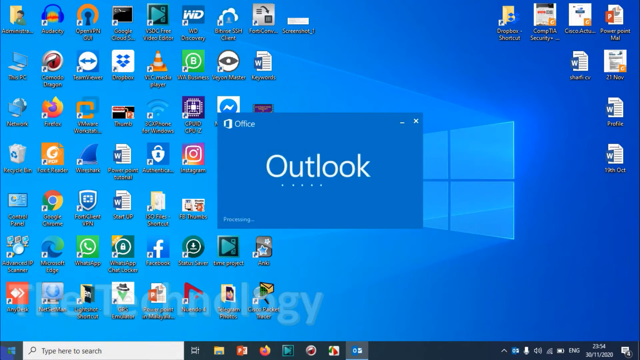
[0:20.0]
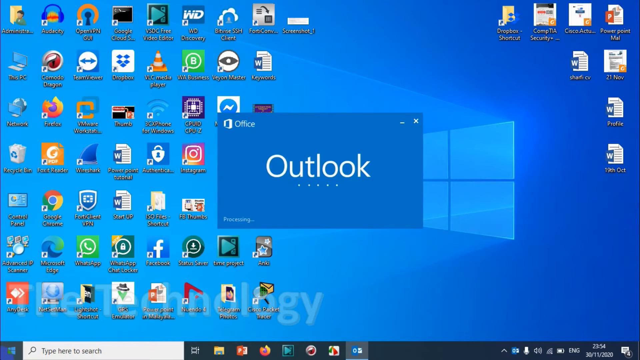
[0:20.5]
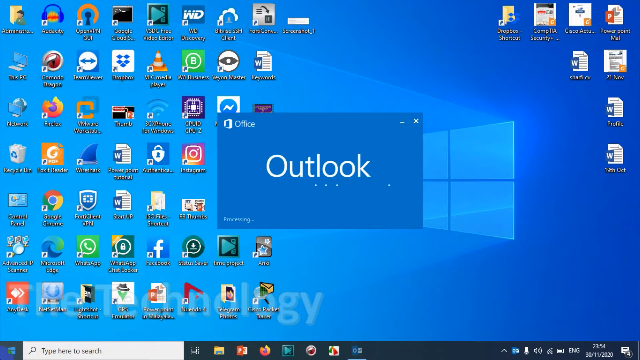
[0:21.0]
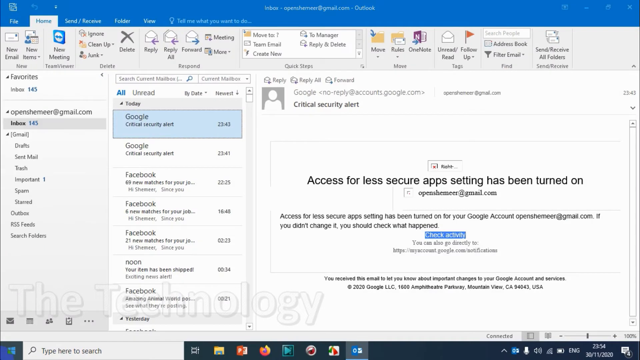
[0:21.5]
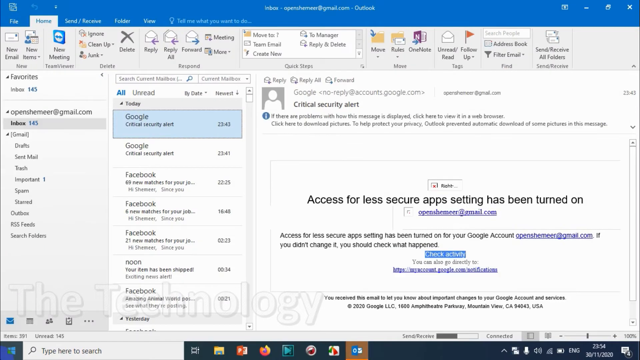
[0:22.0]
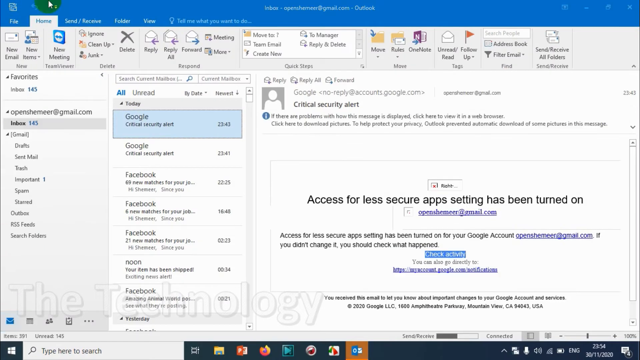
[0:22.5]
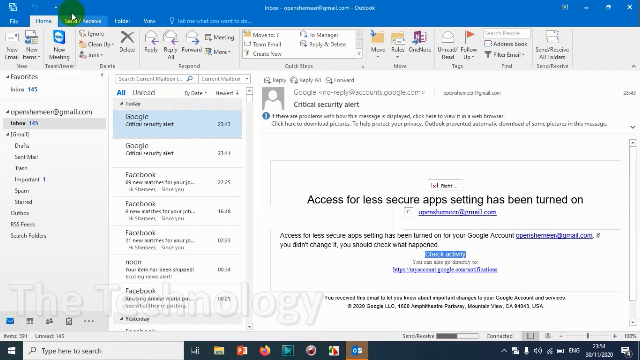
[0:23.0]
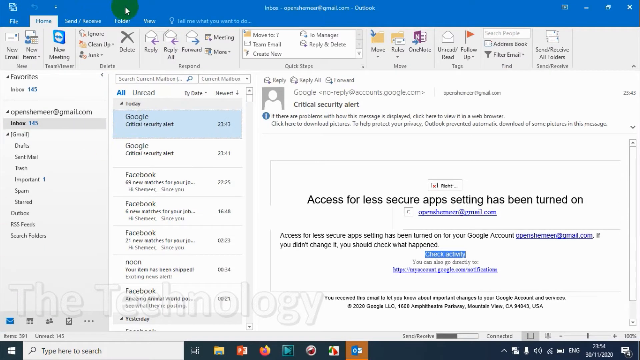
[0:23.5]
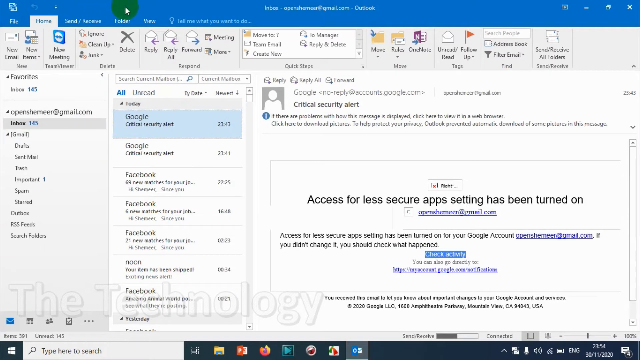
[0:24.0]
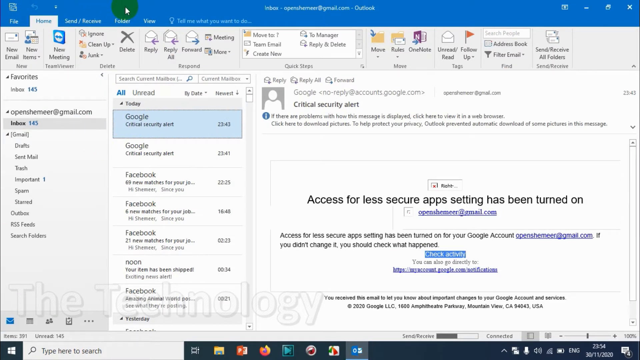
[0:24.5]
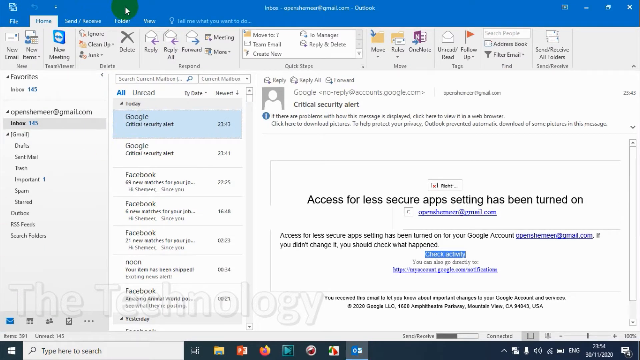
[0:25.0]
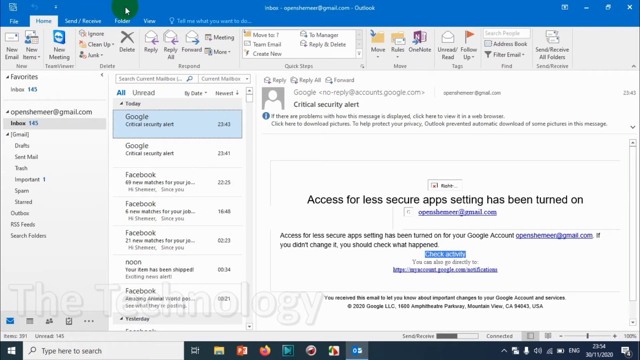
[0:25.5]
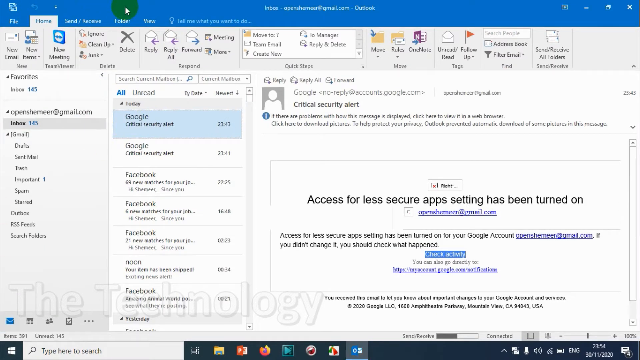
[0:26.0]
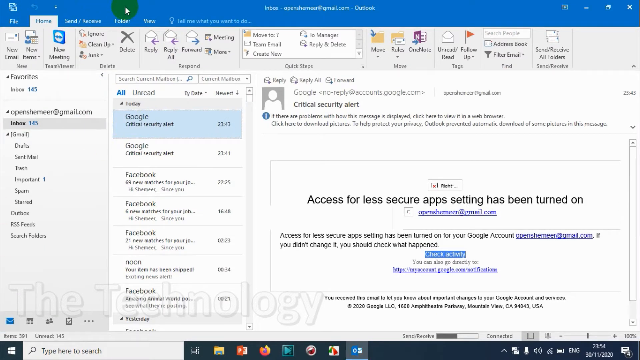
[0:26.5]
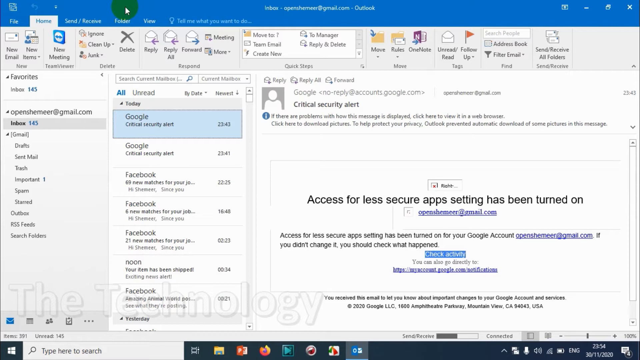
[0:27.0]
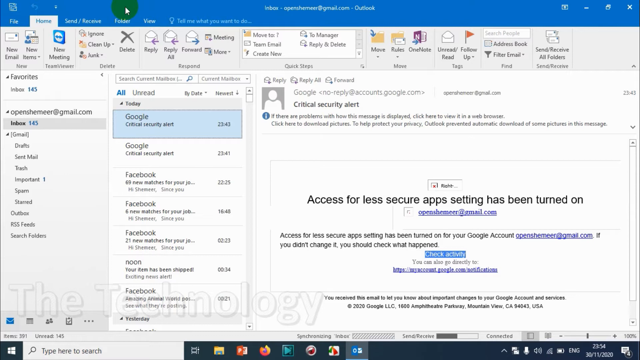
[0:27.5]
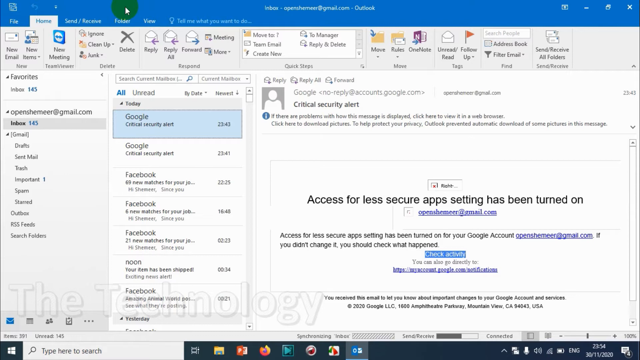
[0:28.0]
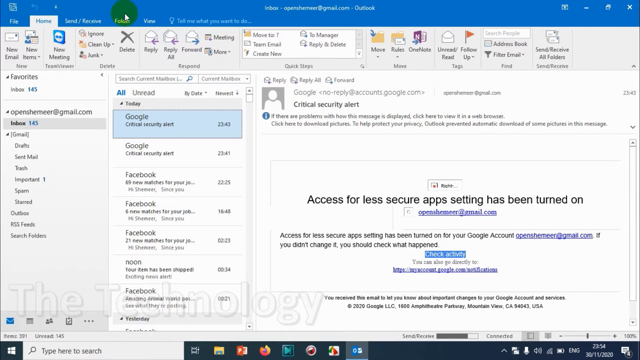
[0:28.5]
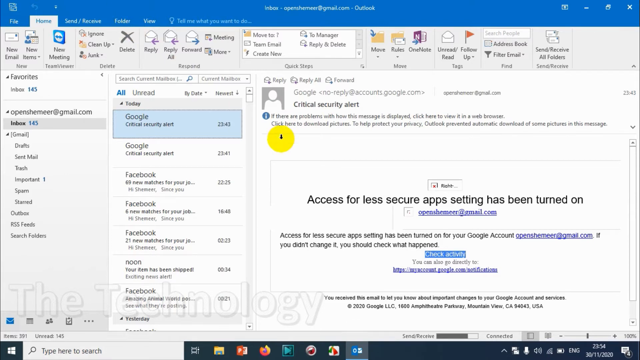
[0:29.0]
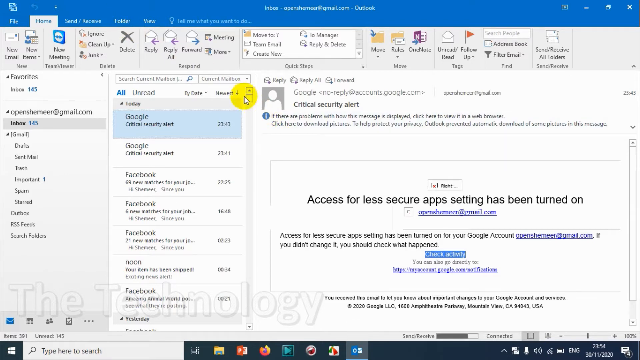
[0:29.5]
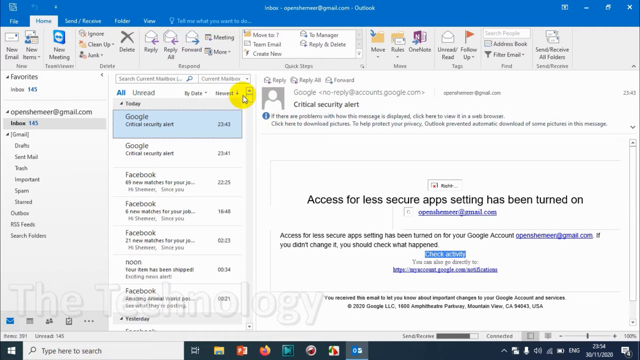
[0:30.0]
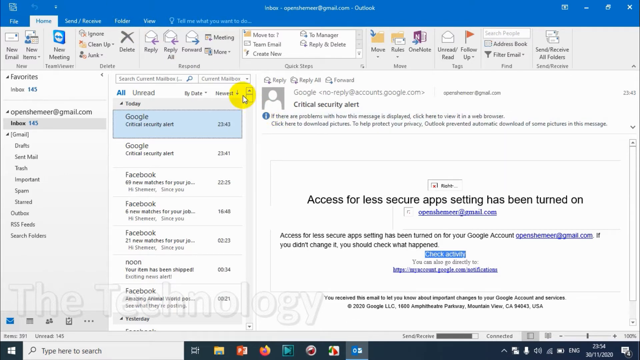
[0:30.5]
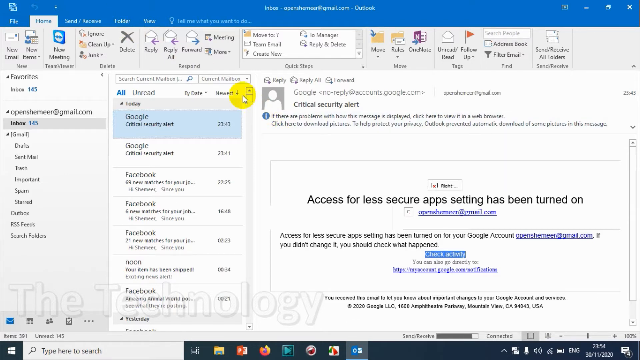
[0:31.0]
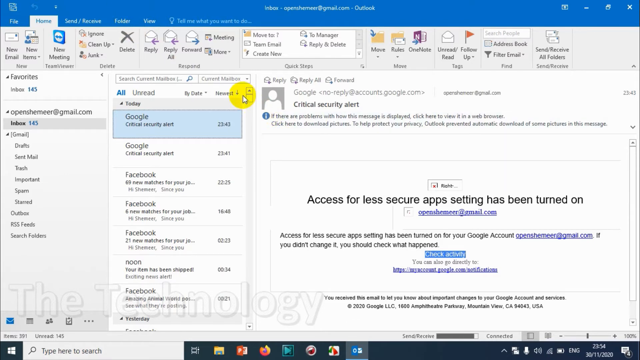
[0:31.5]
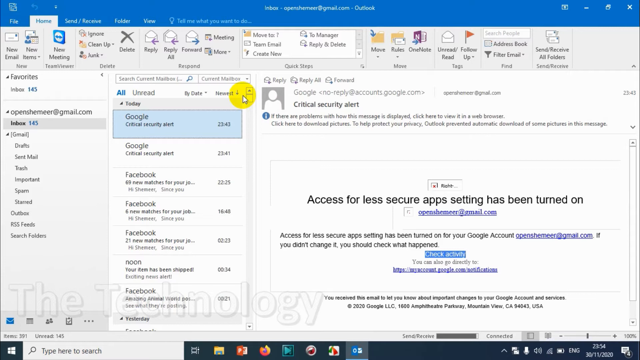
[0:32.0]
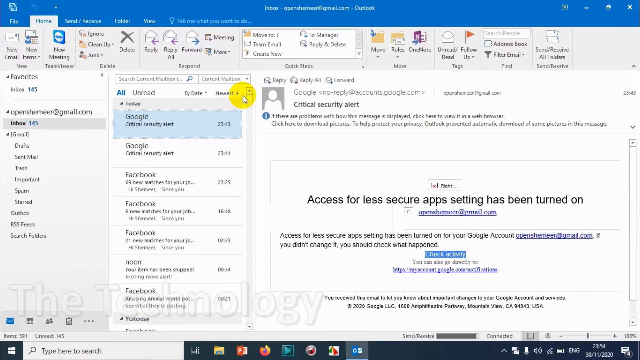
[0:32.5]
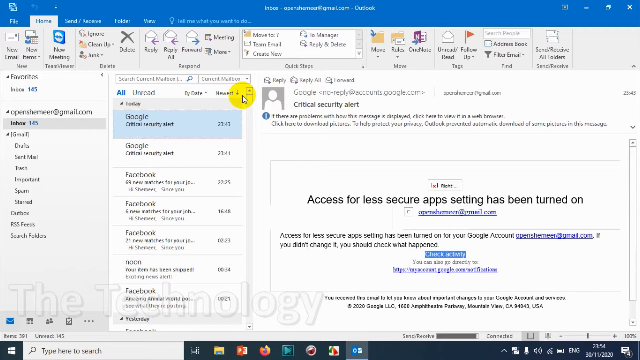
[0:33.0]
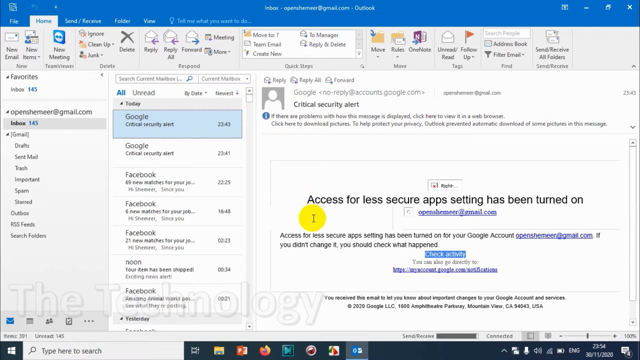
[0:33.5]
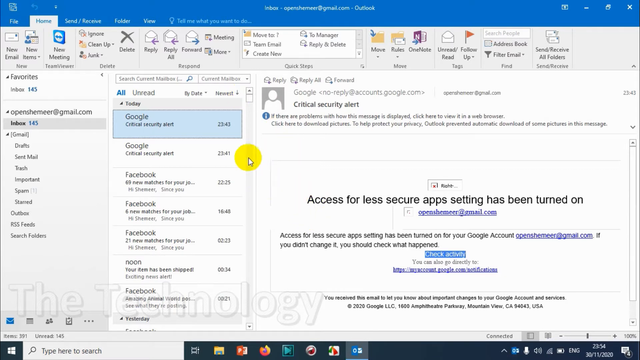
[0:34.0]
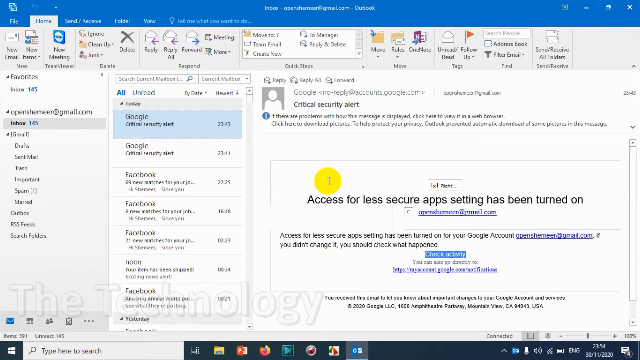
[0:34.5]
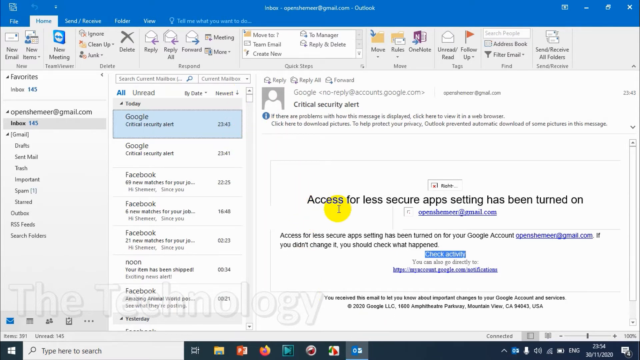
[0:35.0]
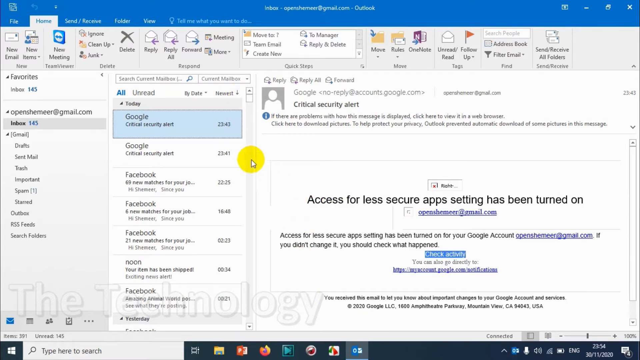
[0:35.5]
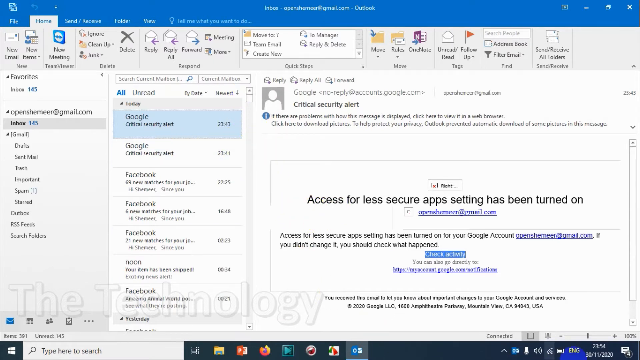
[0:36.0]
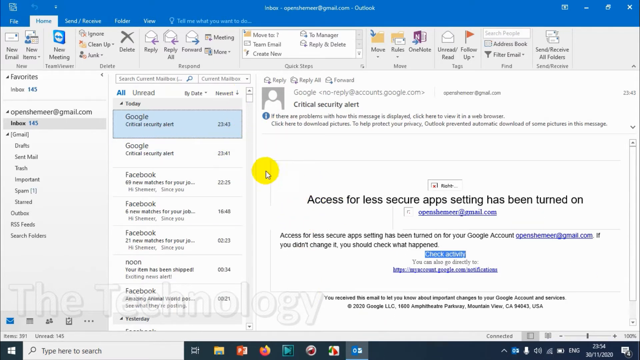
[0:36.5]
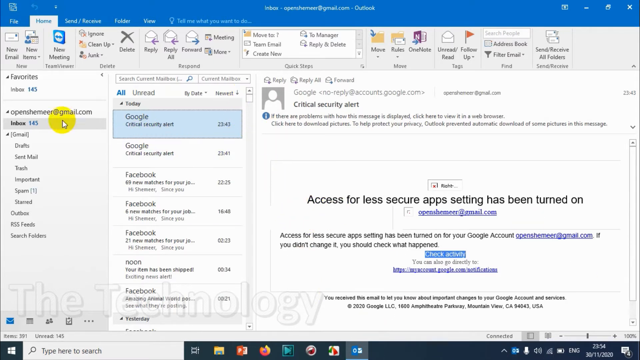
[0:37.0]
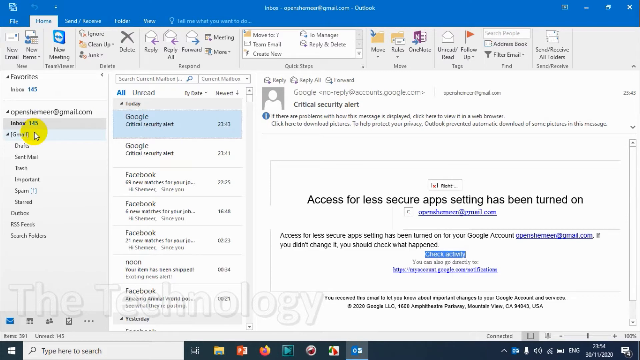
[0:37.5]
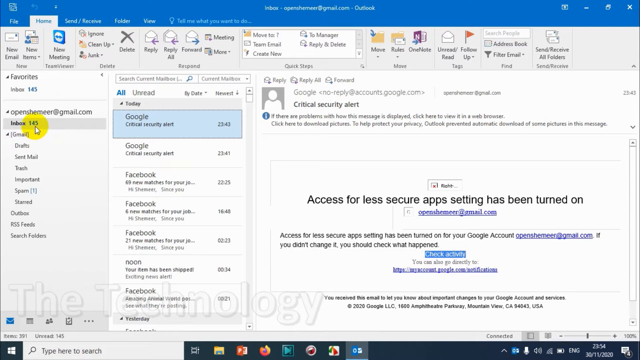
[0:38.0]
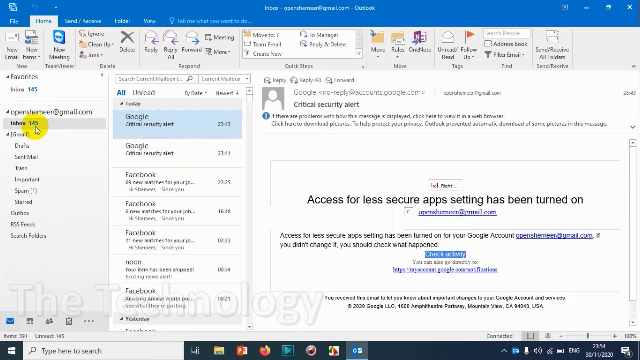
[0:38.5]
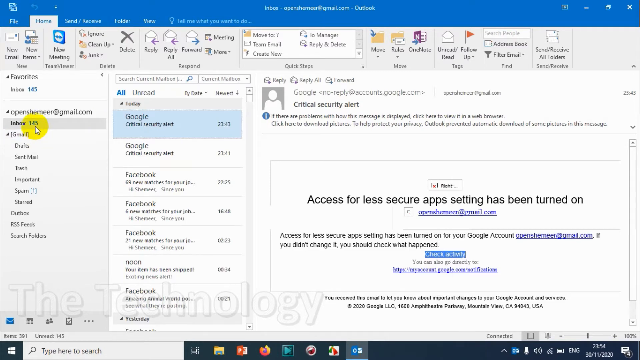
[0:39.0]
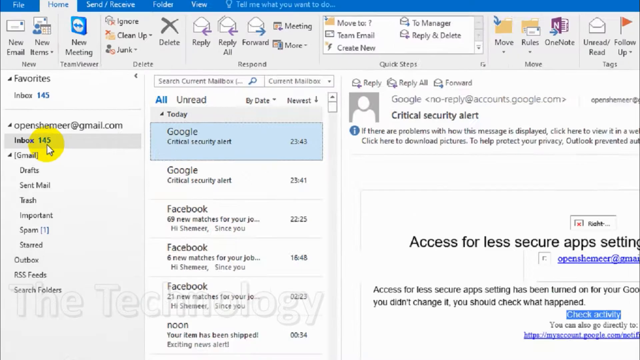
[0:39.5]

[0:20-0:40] A blue Windows page has a big window with four panes and several applications on the front screen, with a small box in the middle that says "Office Outlook," as if the Outlook application is opening. Outlook loads and another page opens. The green pointer is placed on a section in Outlook and changes to yellow as it is moved across the screen. It goes back and forth and lands on the inbox. The page, which has several items of writing that are not distinguishable, is enlarged; then it returns to the main landing page with all the applications, the blue screen, the windows, "the technology" in the back, and the opaque area at the bottom left-hand corner, with Office Outlook in the center on the blue screen.